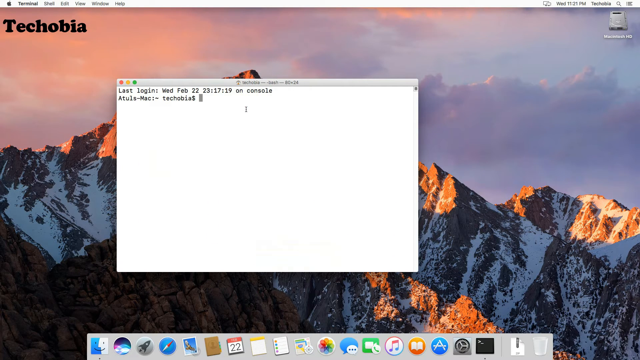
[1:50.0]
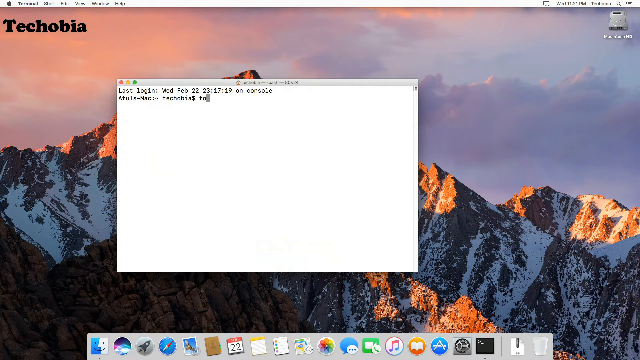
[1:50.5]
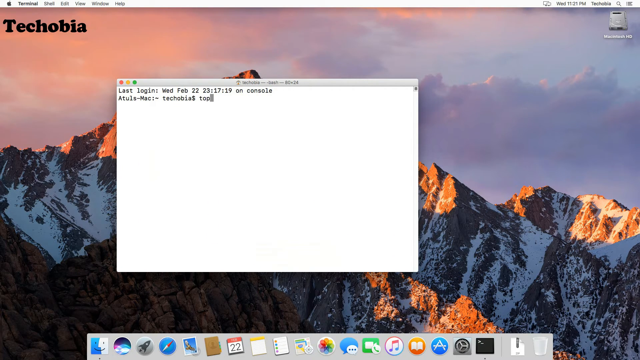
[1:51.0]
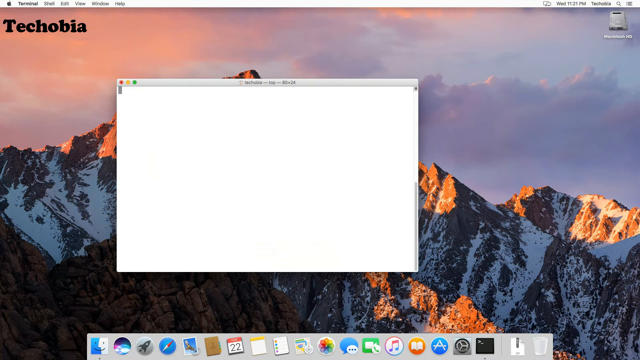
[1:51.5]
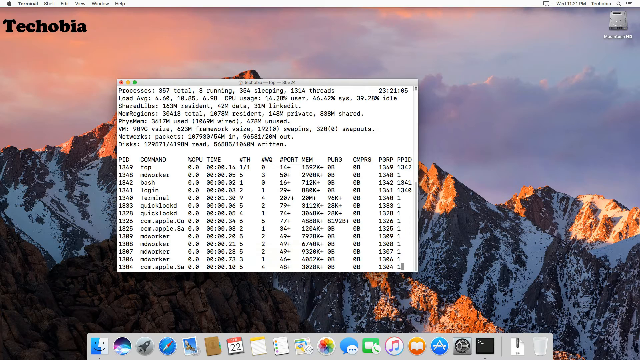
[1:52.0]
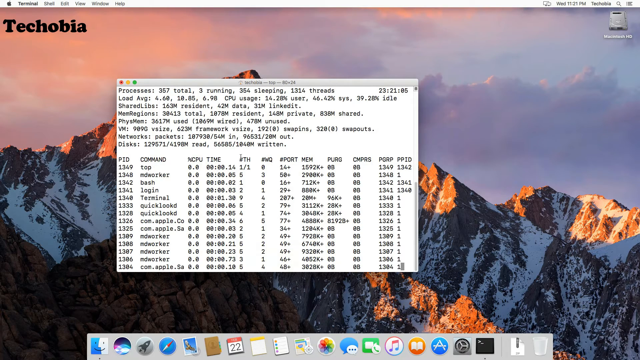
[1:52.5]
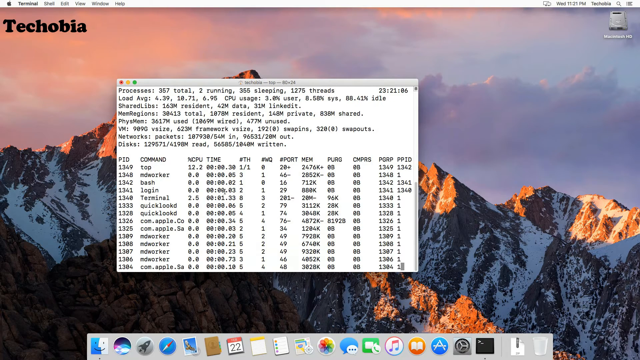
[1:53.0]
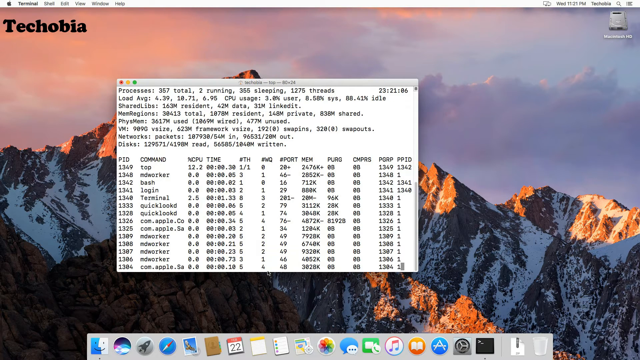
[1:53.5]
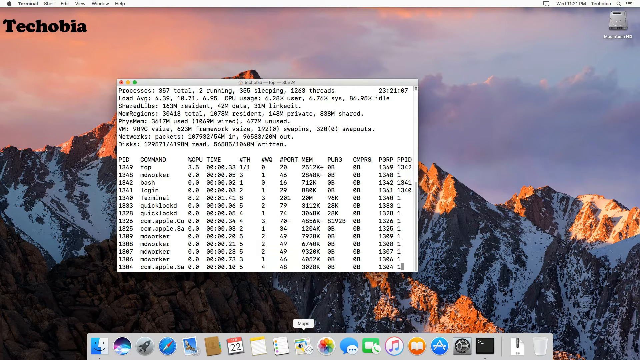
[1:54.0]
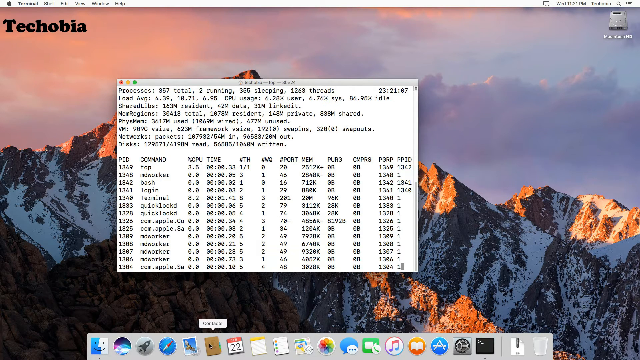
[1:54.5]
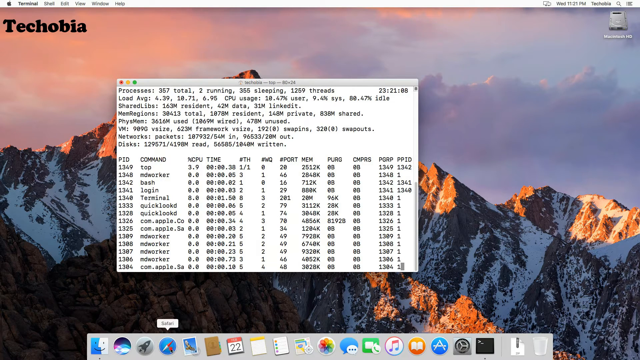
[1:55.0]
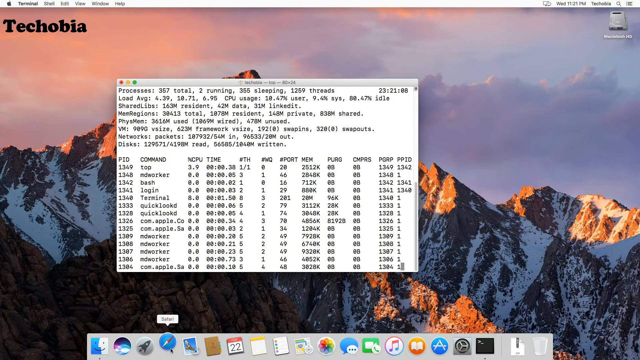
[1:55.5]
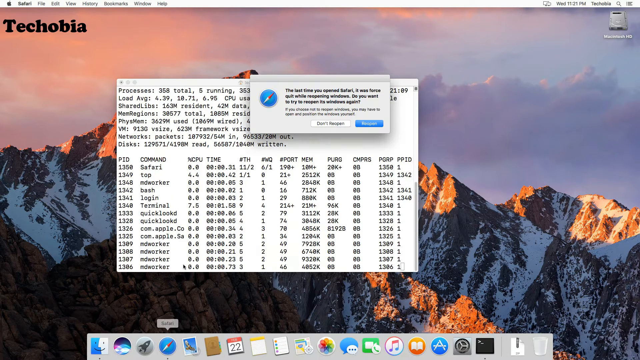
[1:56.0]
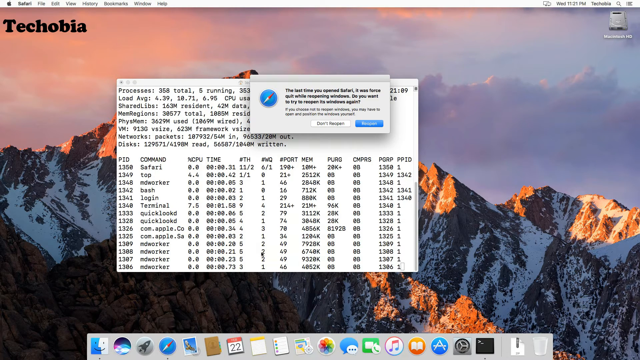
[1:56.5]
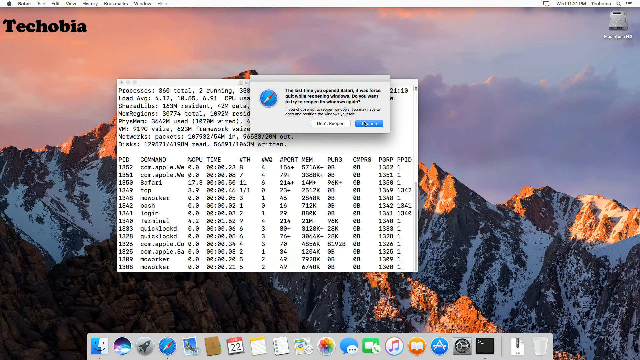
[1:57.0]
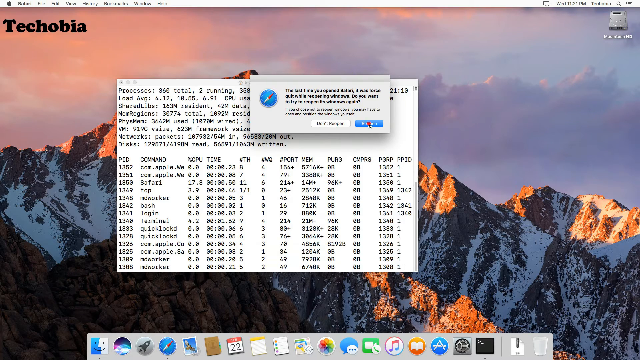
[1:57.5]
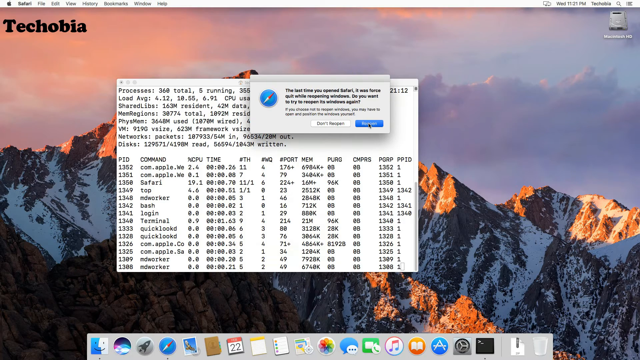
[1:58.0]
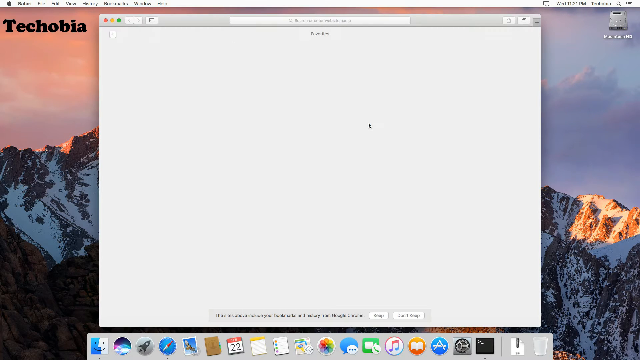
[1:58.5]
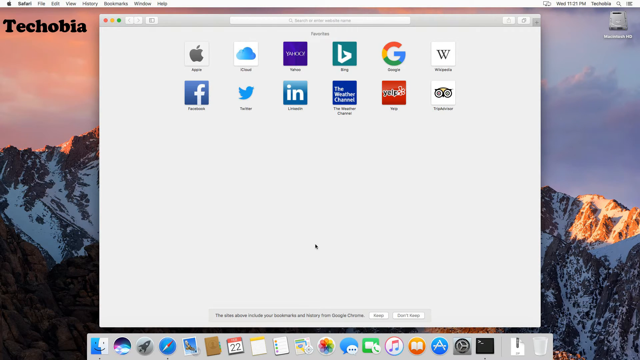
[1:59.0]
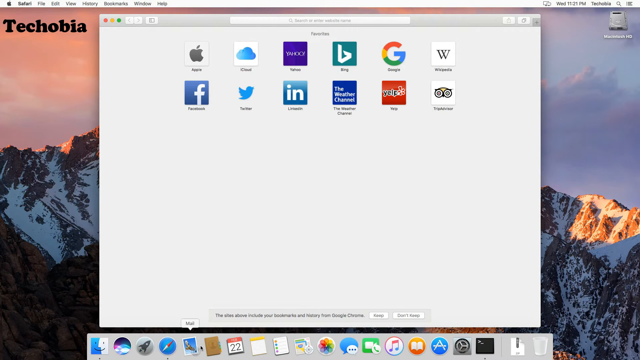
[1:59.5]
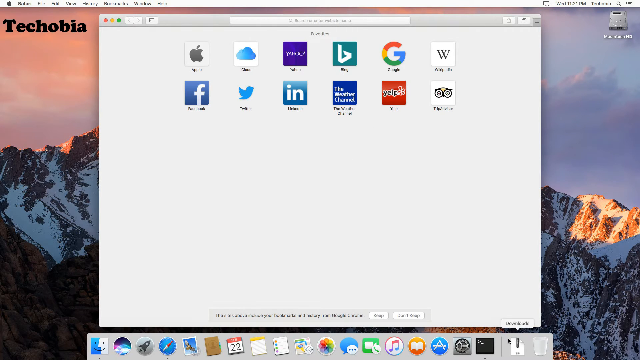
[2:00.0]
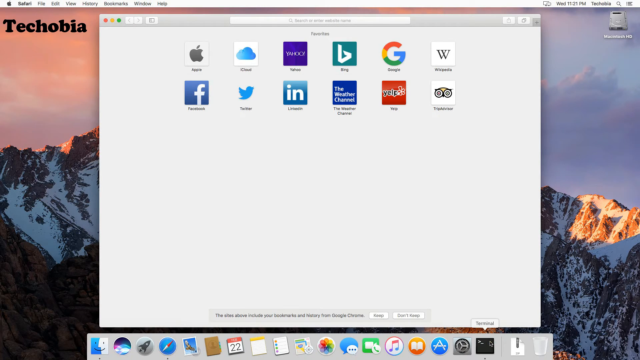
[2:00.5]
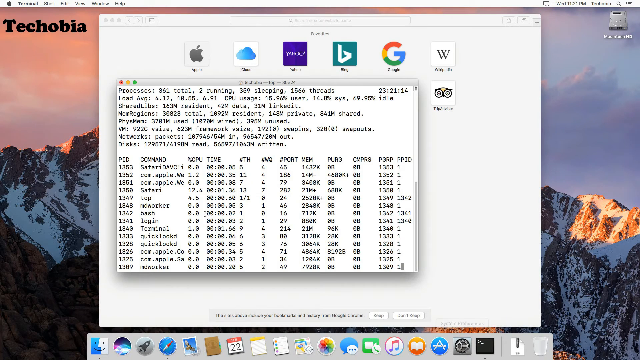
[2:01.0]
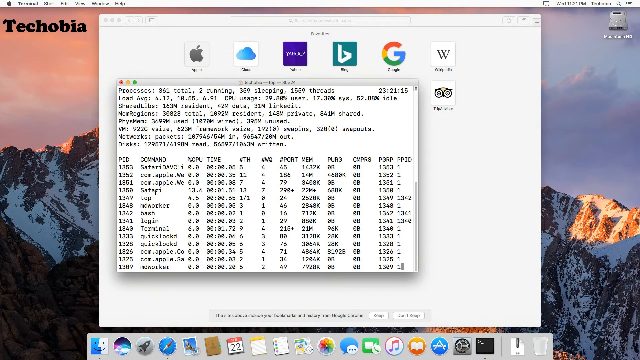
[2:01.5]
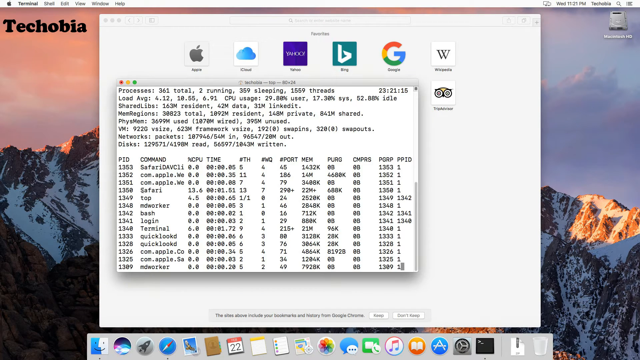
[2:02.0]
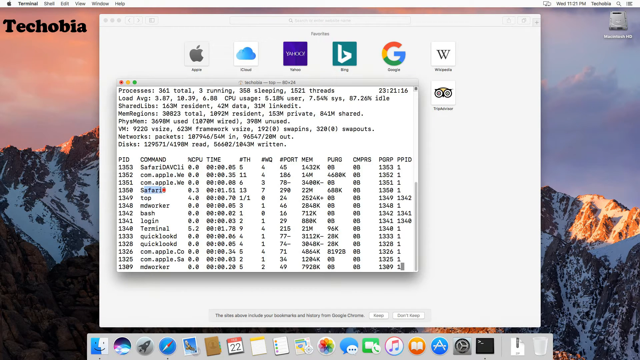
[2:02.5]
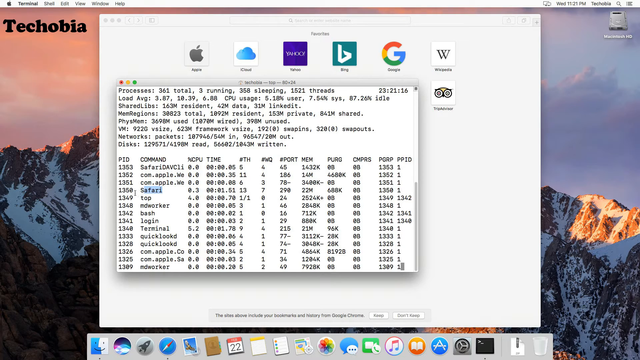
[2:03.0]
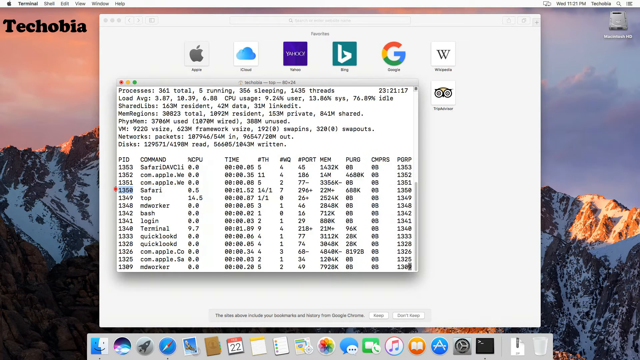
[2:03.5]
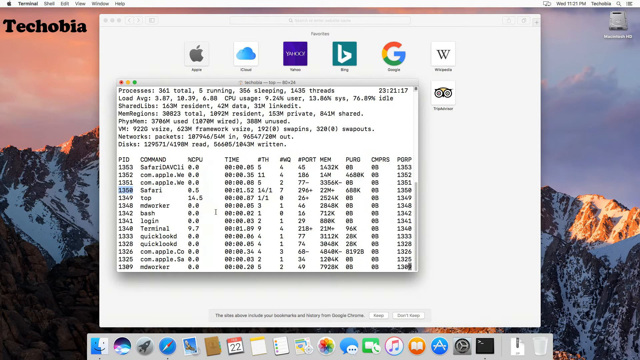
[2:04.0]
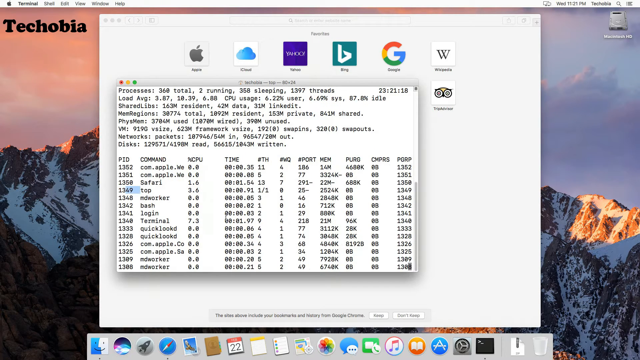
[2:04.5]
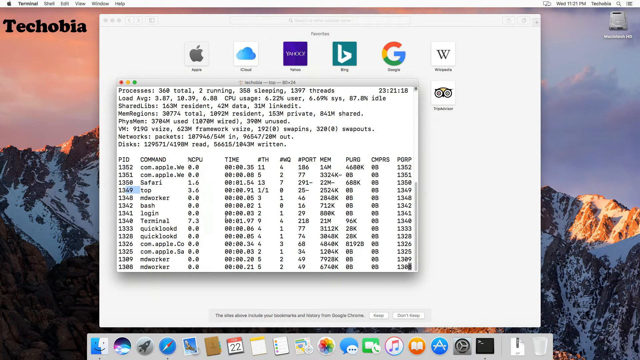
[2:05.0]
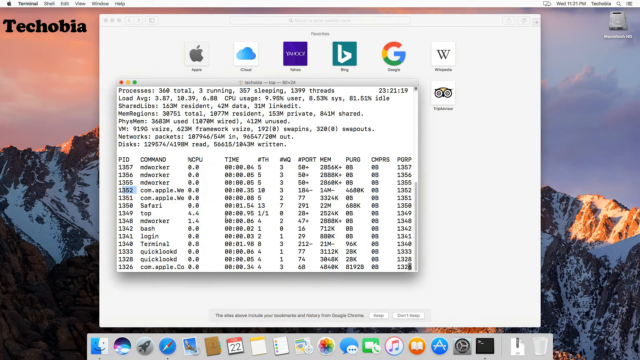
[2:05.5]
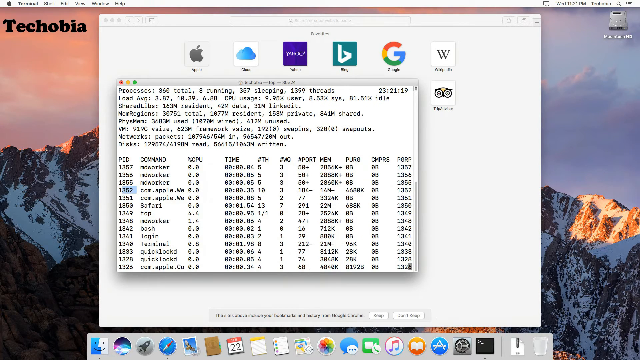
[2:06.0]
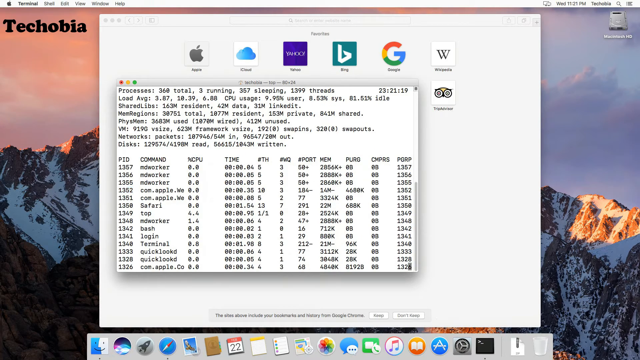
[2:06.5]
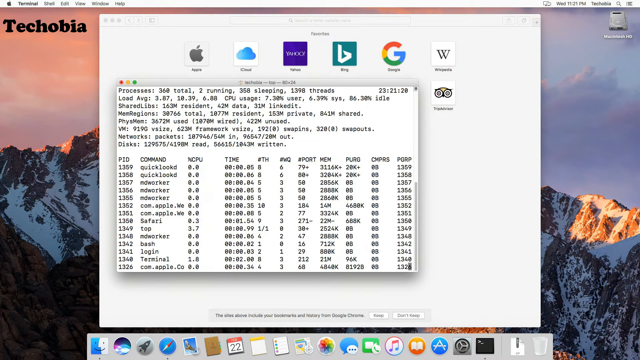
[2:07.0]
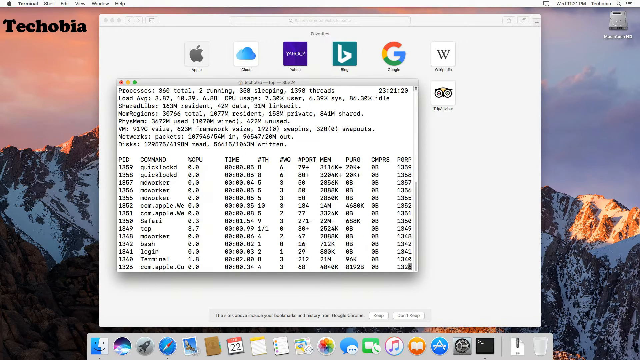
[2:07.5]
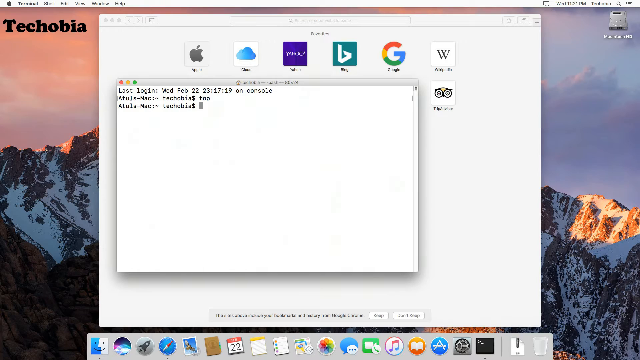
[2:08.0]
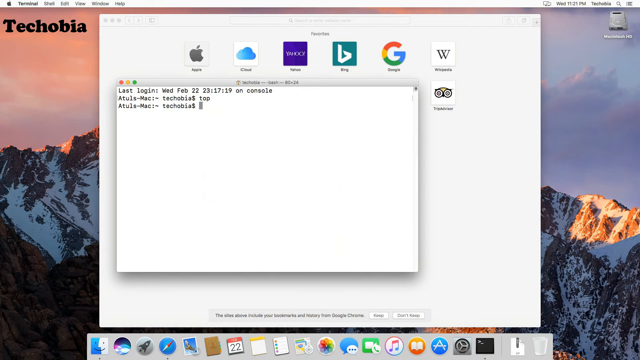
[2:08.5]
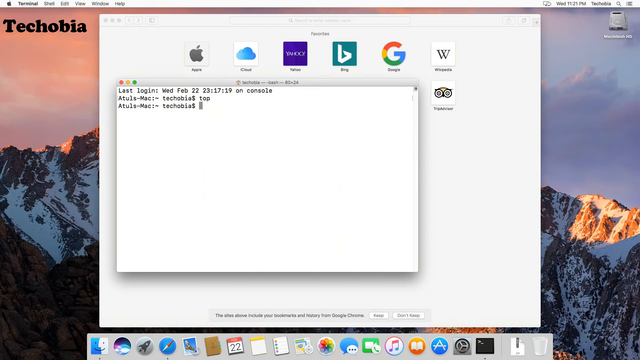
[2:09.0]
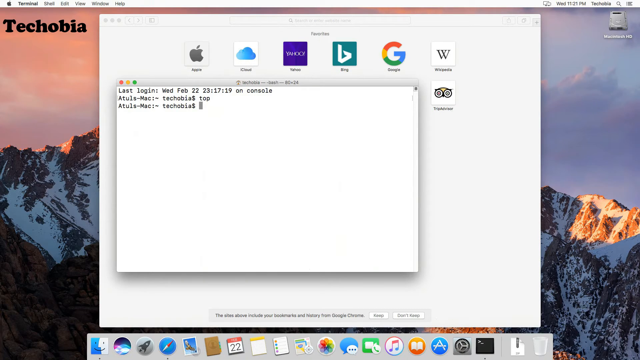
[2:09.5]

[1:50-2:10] The dialog box with the last login information is on screen. It changes into a different dialog box that shows processes and load average, with a bunch of numbers and commands. A dialog box says that the last time Safari was opened it was force quit and asks whether to try to reopen windows again. He clicks the blue button, either report or submit. A menu then opens with Apple, iCloud, Yahoo, and others on it. The screen with the processes, load average, and commands comes up again. He highlights one entry that says "Safari" with the number 1350 next to it, and that seems to go away. The view returns to the box with the last login information, and he types something in it.